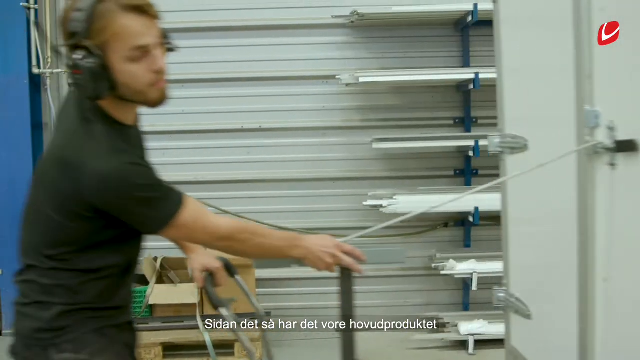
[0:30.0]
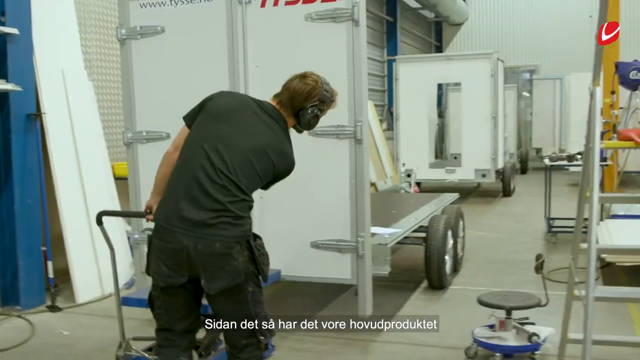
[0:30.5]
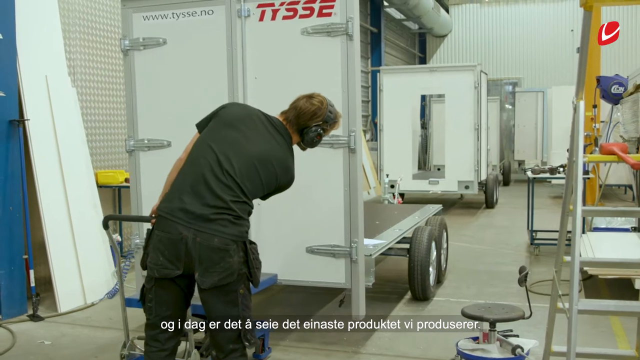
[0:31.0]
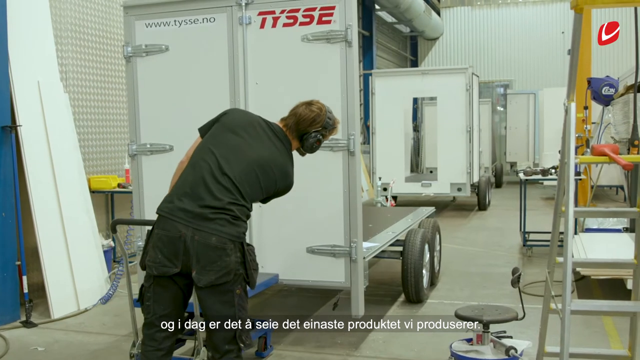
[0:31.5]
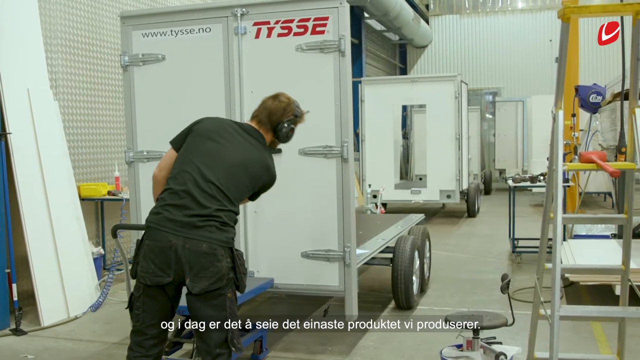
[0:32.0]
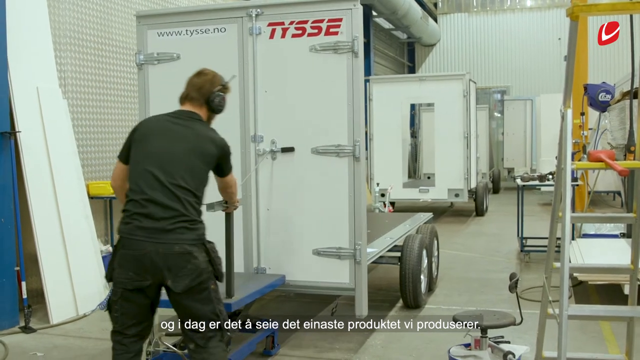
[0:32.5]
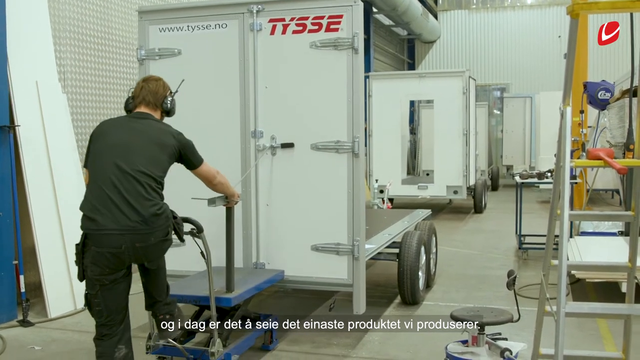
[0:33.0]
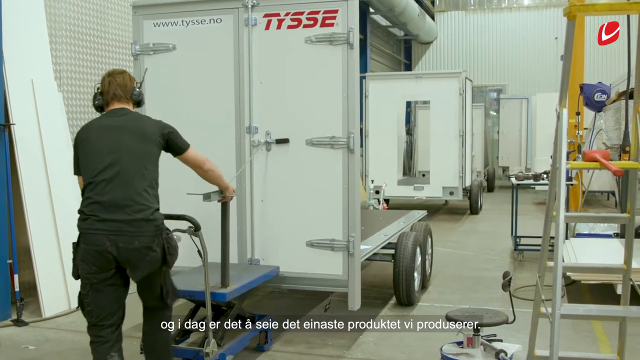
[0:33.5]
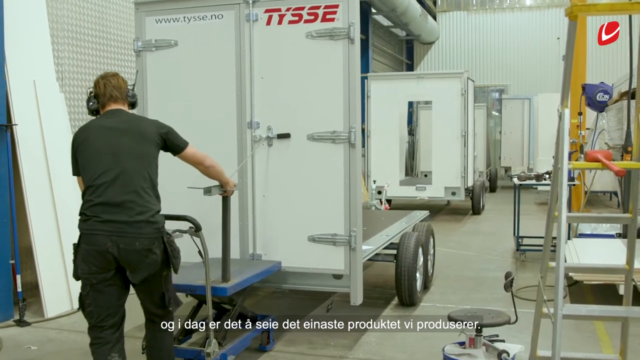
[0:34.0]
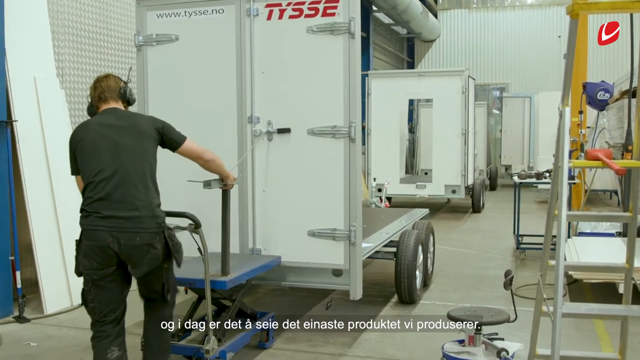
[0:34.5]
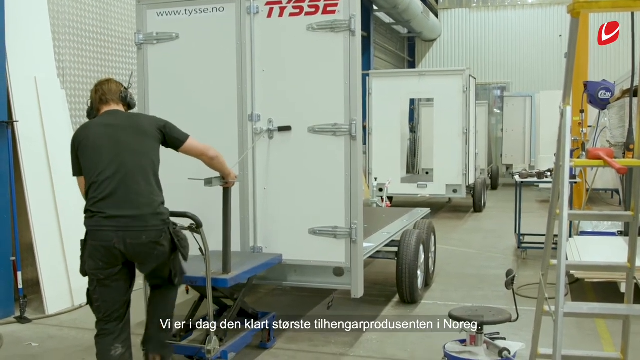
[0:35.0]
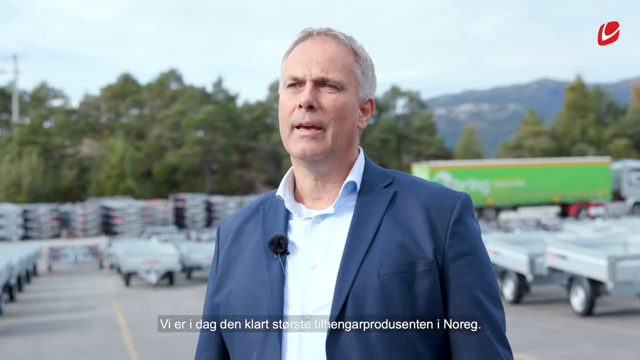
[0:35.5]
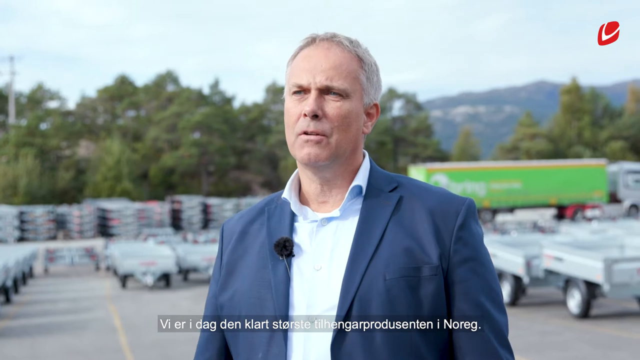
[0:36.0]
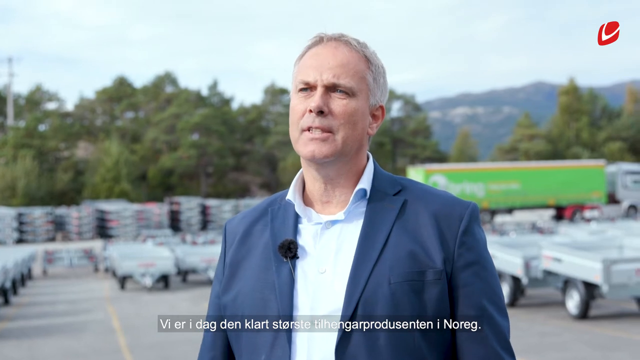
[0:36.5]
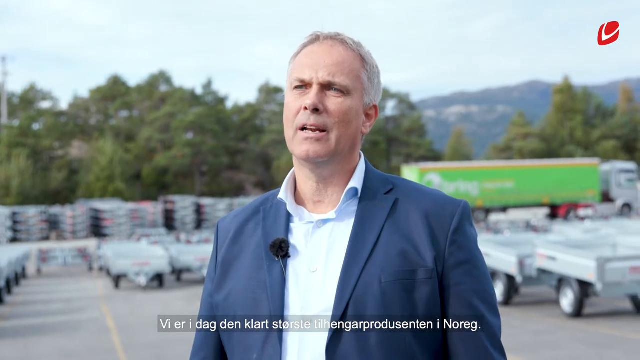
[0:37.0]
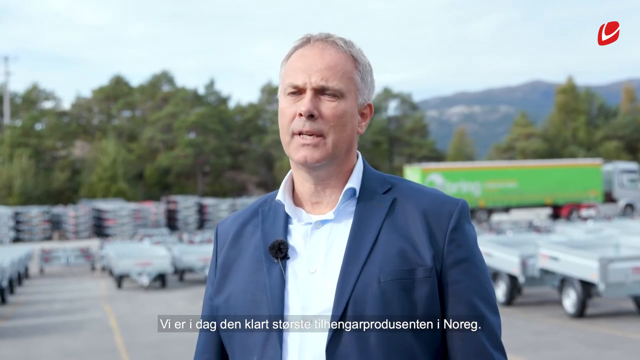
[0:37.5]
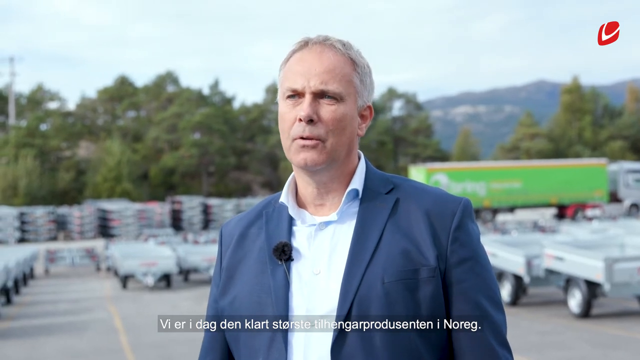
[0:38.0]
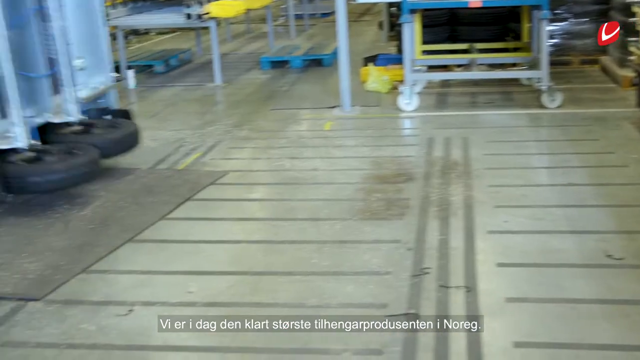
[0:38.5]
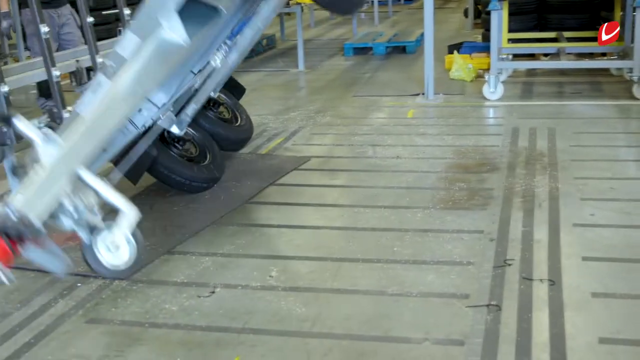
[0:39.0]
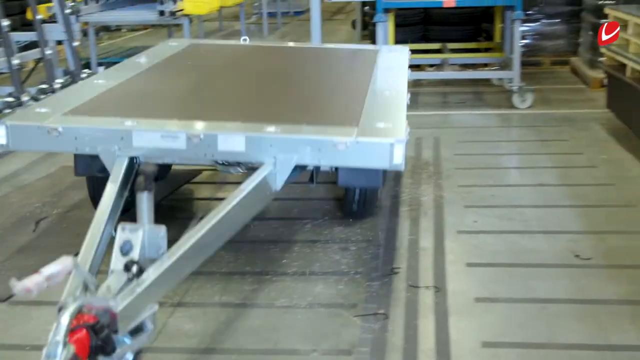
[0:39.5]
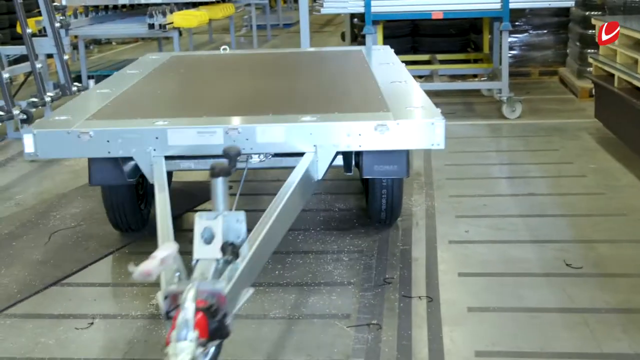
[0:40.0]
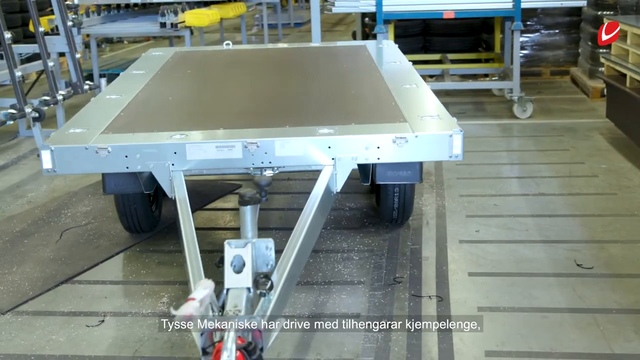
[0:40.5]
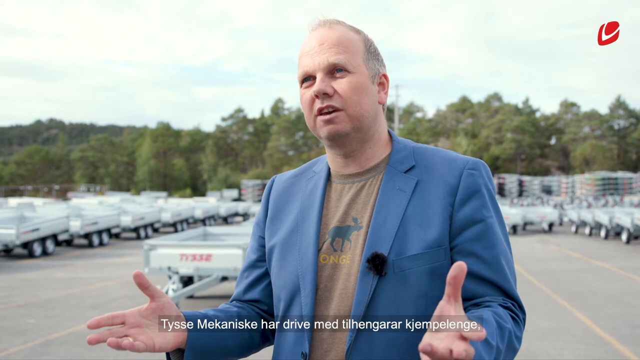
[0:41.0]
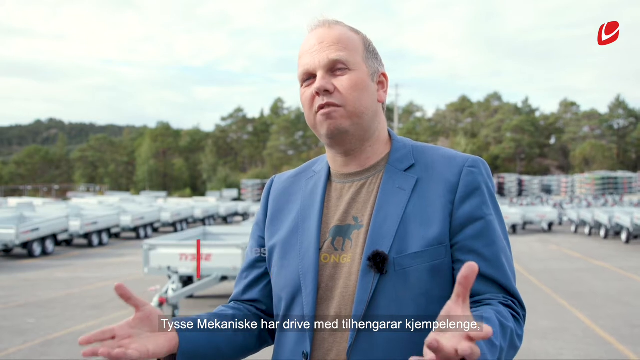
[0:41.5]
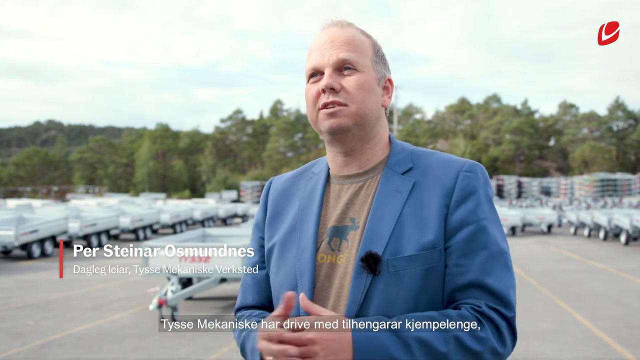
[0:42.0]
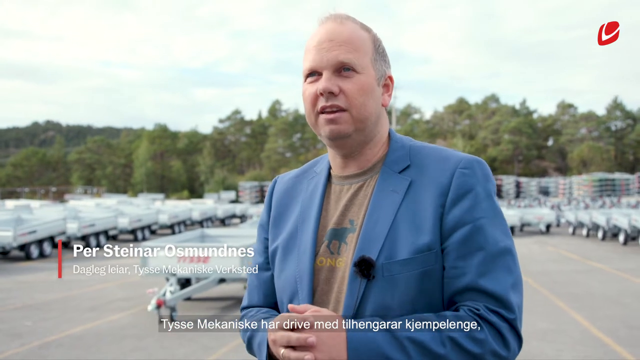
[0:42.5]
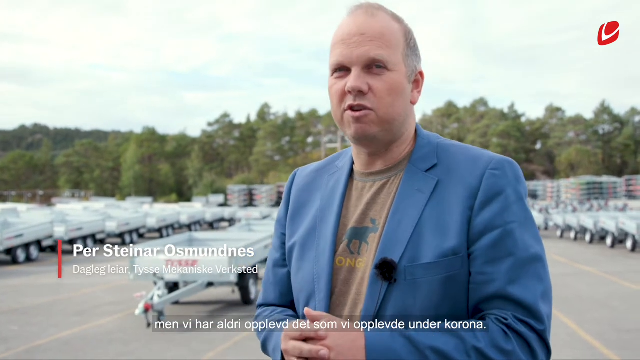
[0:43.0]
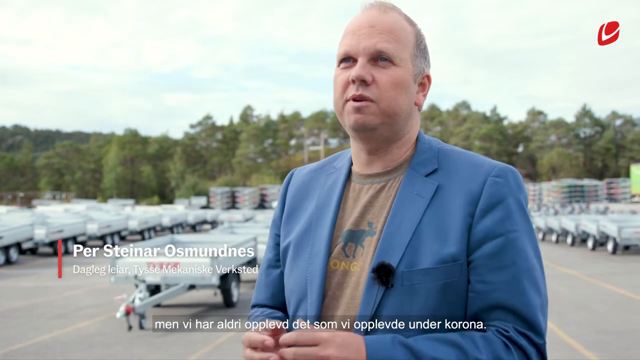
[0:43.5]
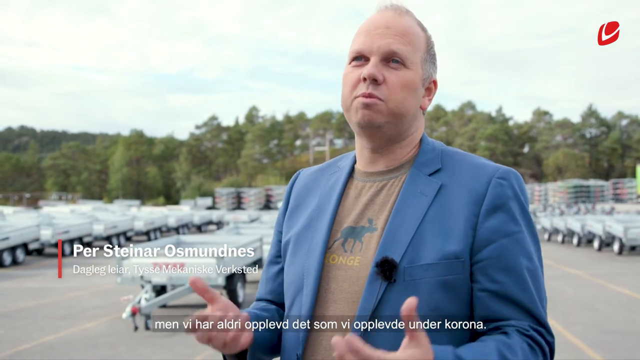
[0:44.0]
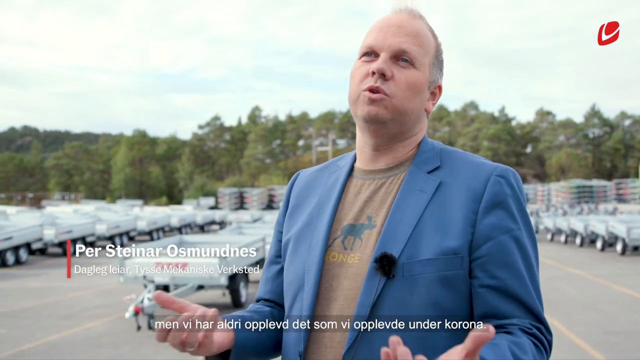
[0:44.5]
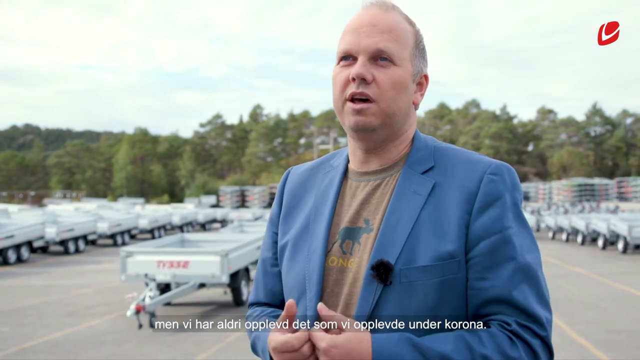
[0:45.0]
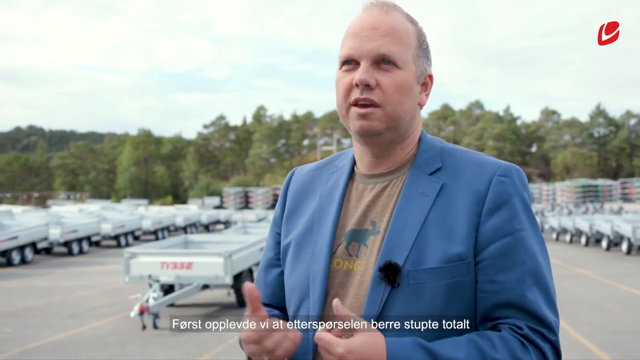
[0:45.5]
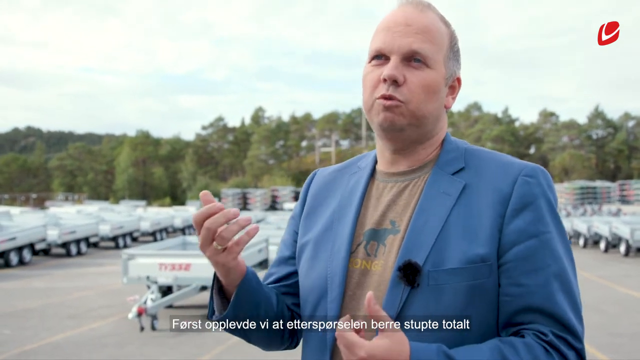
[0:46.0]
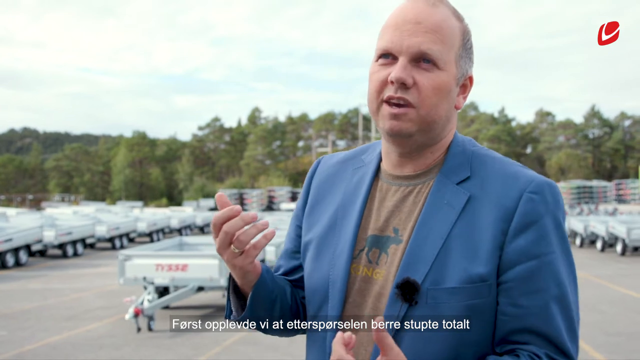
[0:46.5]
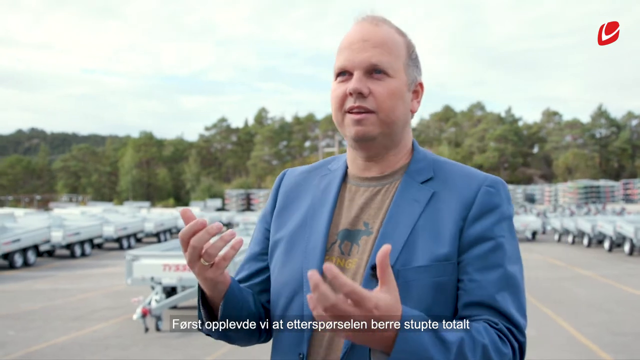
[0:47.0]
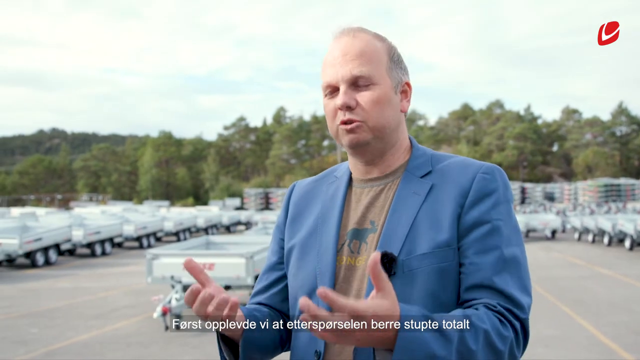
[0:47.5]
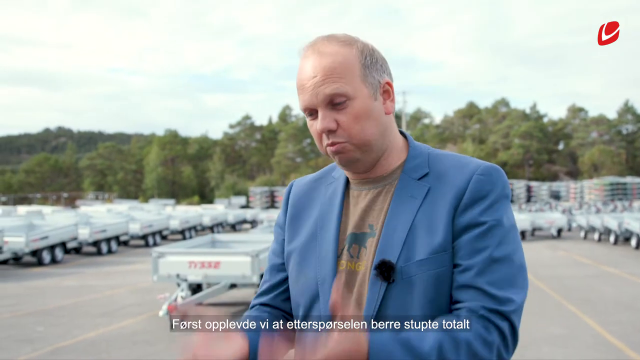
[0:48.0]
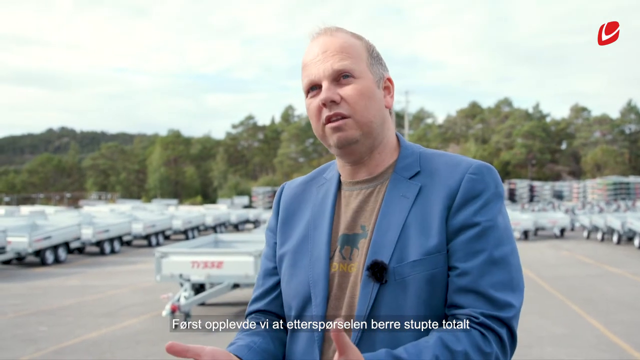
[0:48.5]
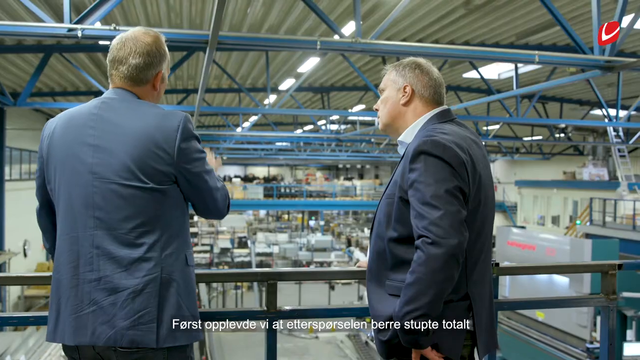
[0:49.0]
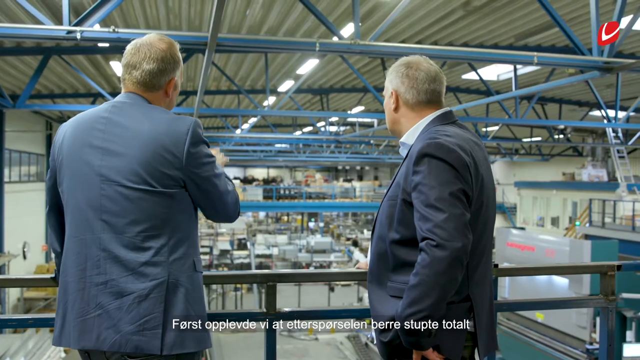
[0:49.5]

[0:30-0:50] A man is working while wearing something on his ears that seems to be noise-canceling ear protection rather than headphones. The on-screen words are still not in English. In the background there looks like a door of some sort. The video then returns to the first man, and three names appear on screen: "PER", then "STEINAR", then "OSMUNDNES", with very small text underneath, possibly his title at the company. The text is not in English. He is talking, his mouth moving, and he has a mic attached to him.